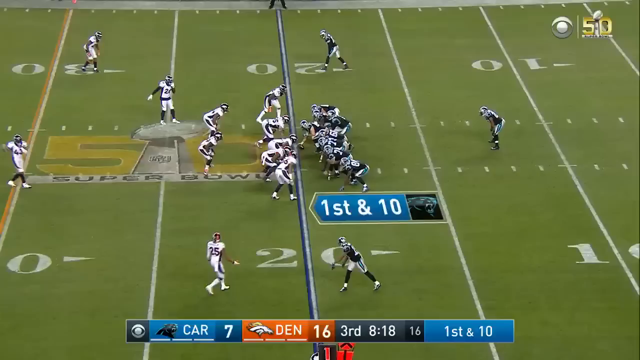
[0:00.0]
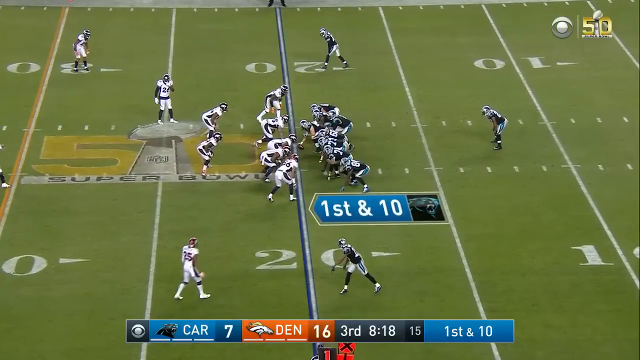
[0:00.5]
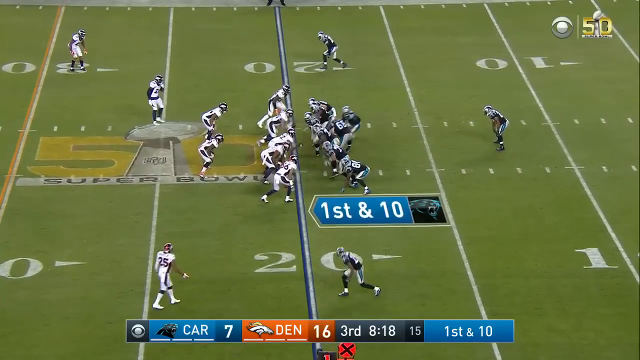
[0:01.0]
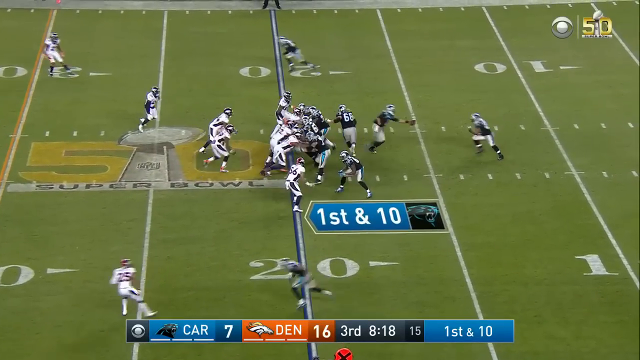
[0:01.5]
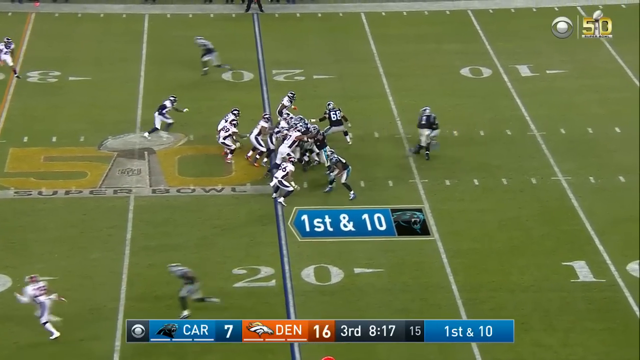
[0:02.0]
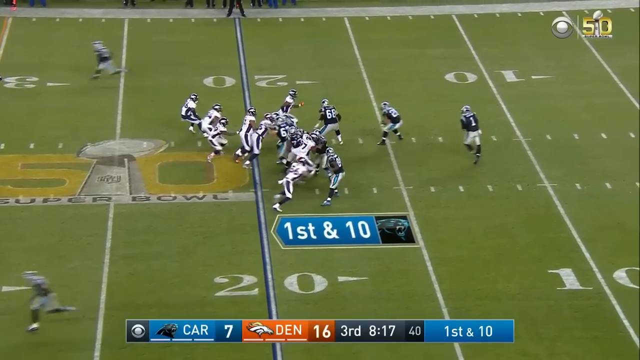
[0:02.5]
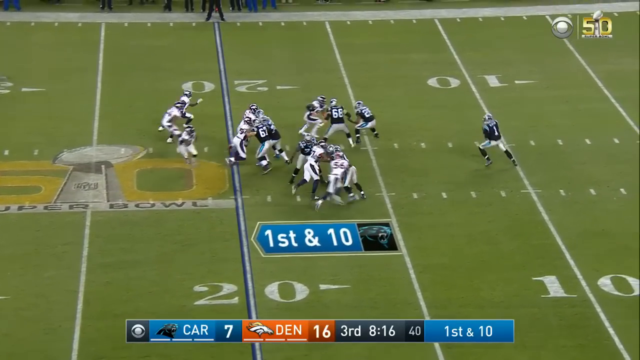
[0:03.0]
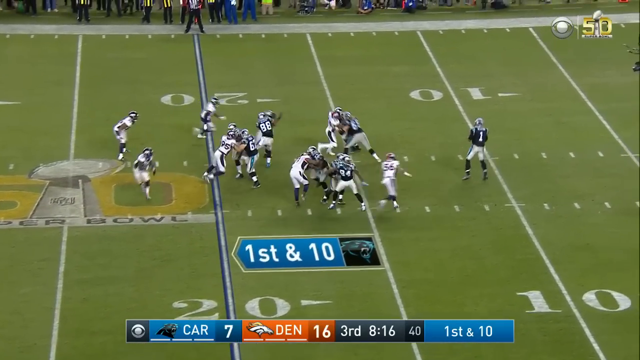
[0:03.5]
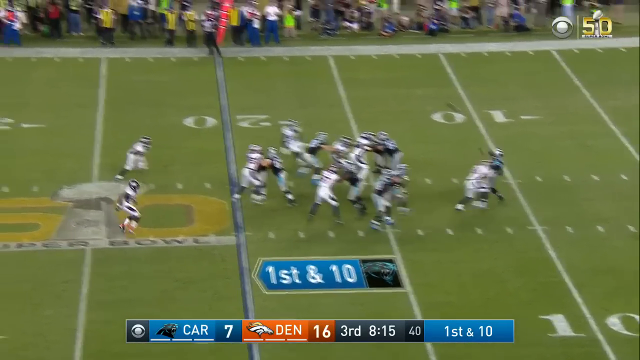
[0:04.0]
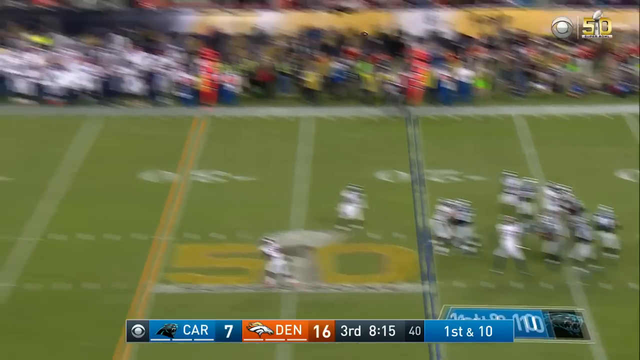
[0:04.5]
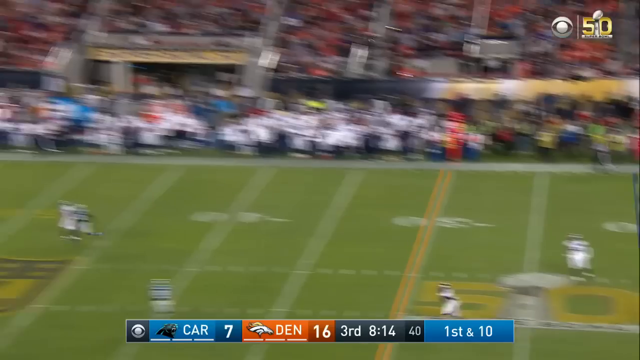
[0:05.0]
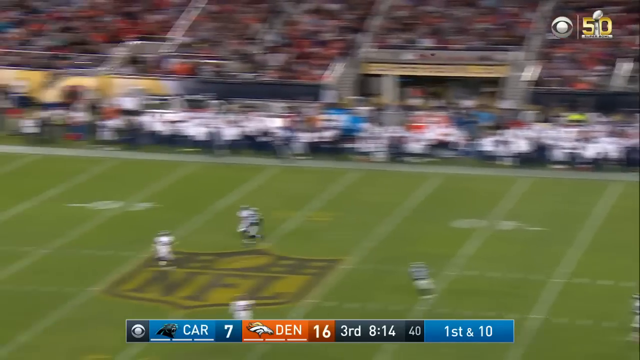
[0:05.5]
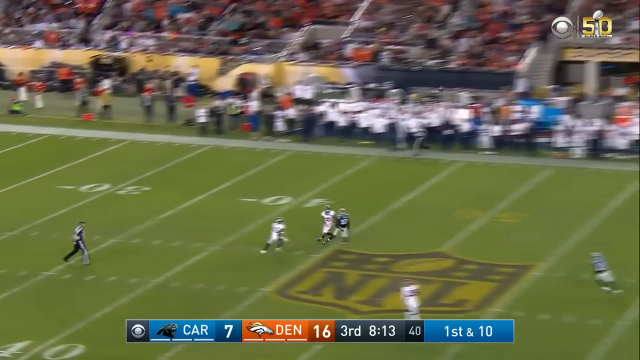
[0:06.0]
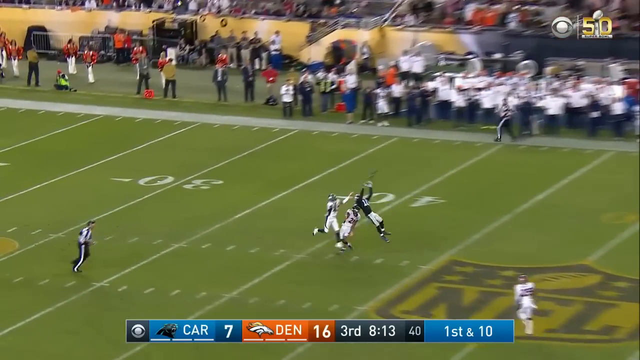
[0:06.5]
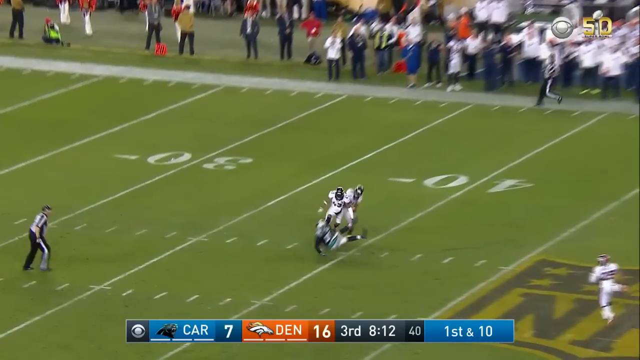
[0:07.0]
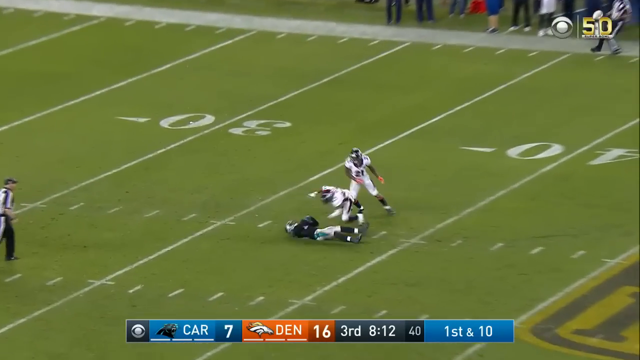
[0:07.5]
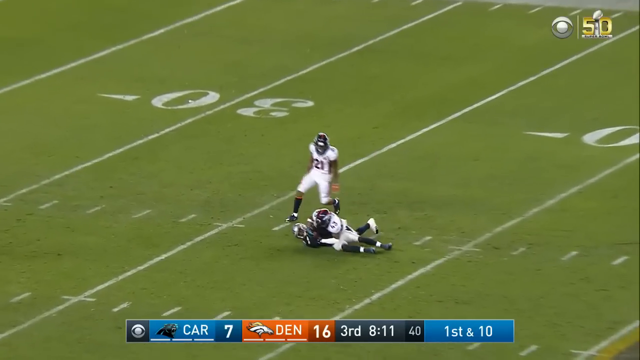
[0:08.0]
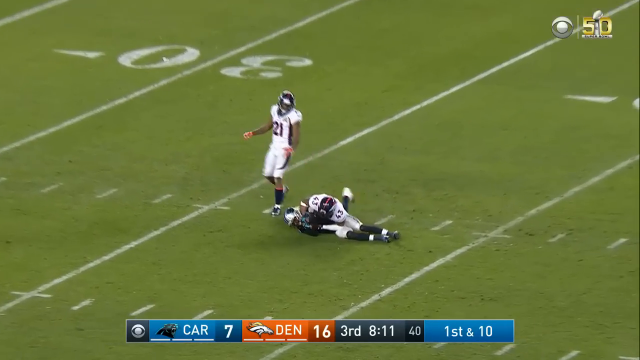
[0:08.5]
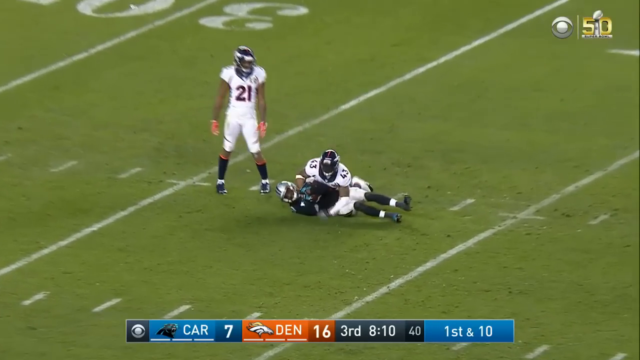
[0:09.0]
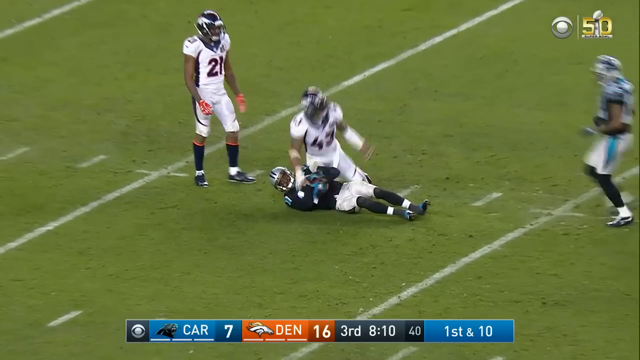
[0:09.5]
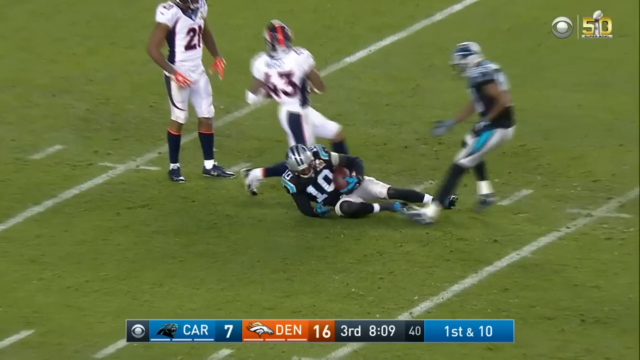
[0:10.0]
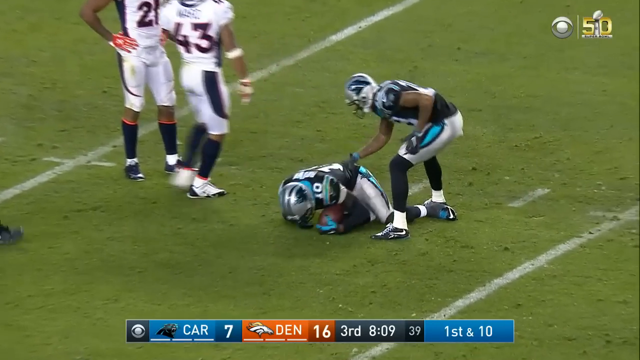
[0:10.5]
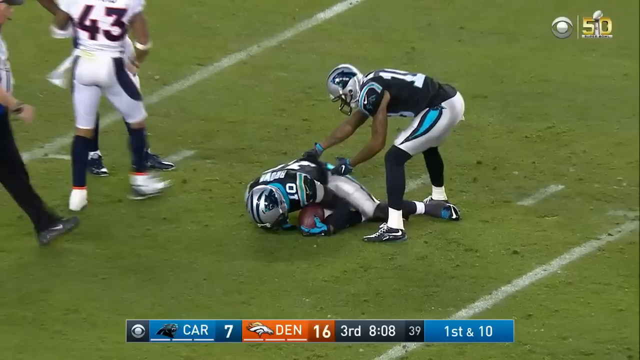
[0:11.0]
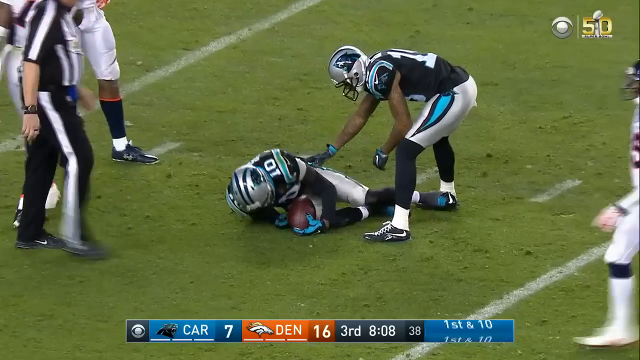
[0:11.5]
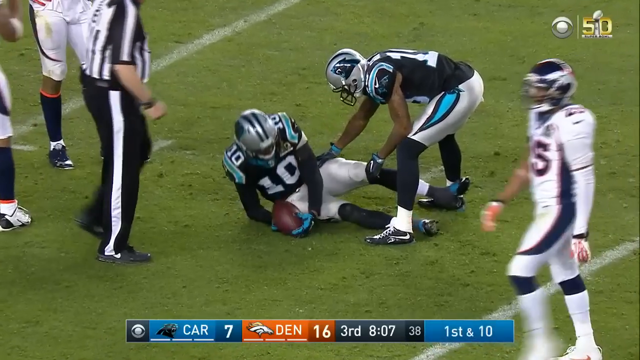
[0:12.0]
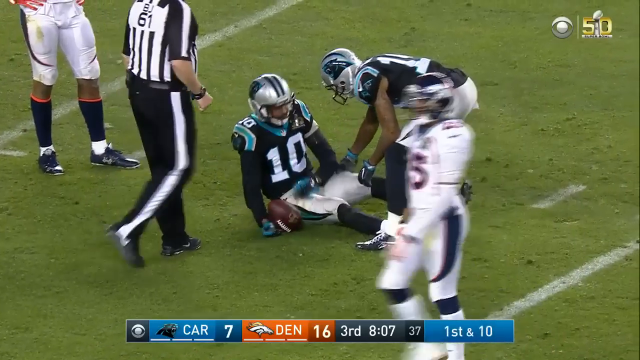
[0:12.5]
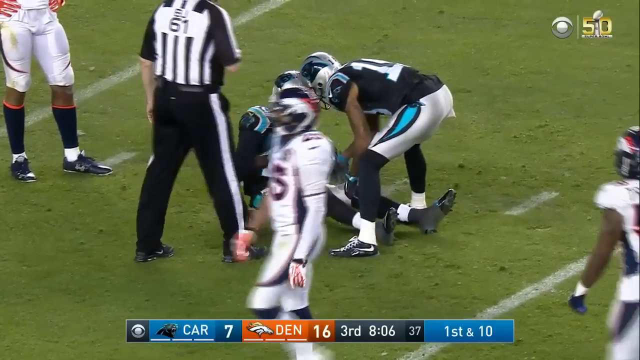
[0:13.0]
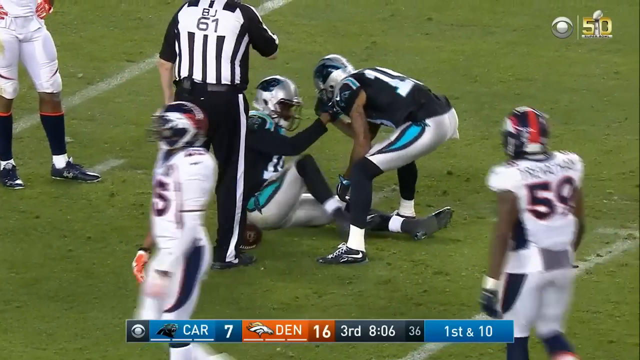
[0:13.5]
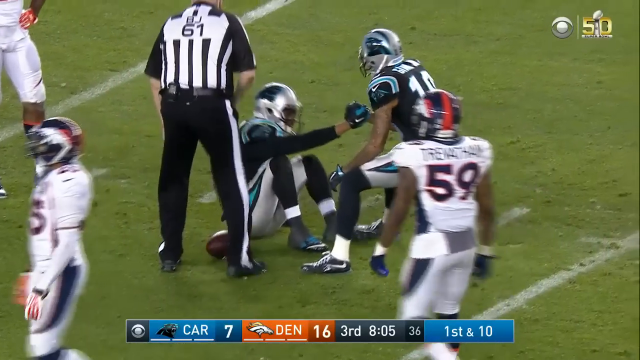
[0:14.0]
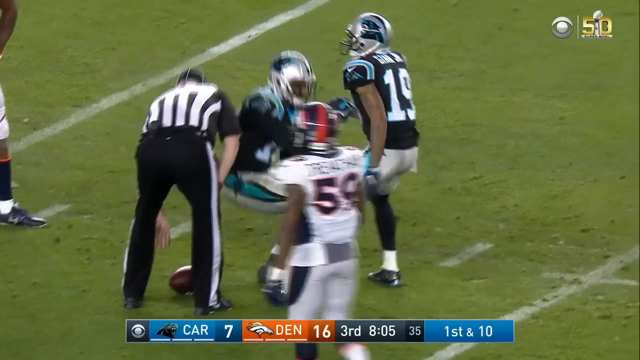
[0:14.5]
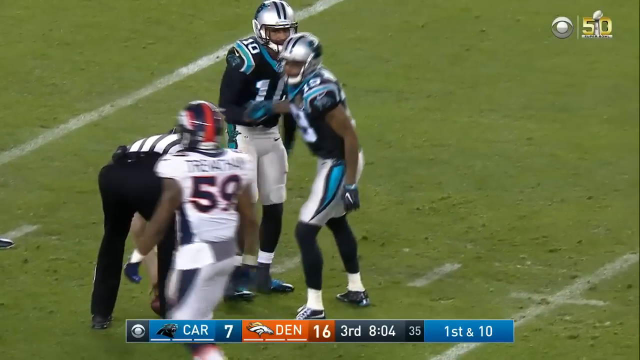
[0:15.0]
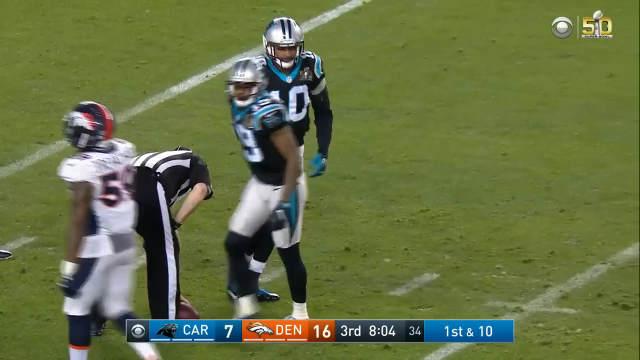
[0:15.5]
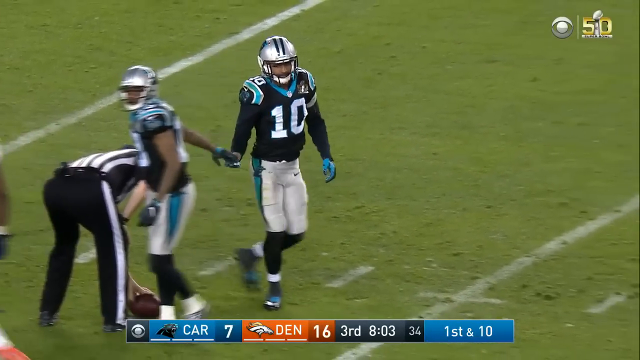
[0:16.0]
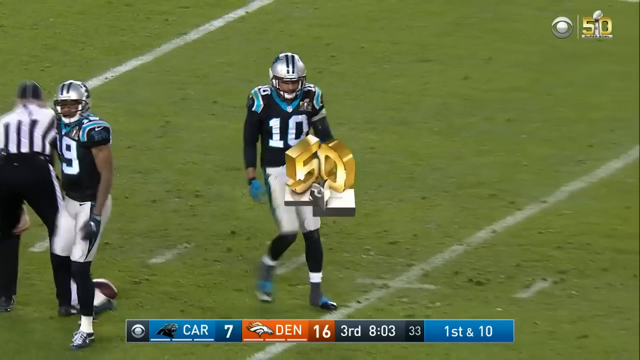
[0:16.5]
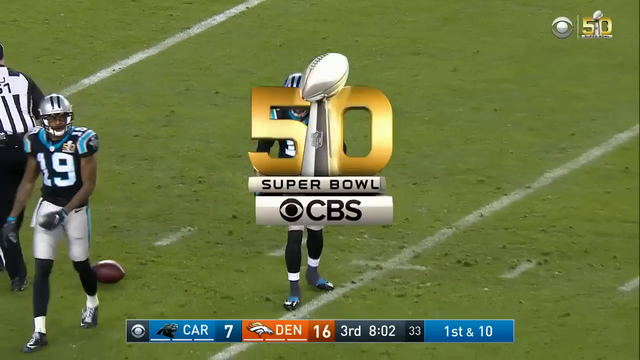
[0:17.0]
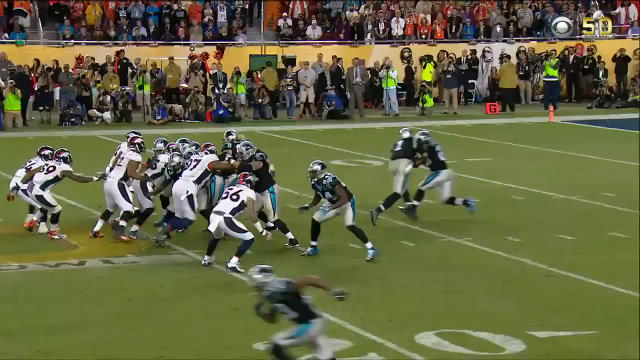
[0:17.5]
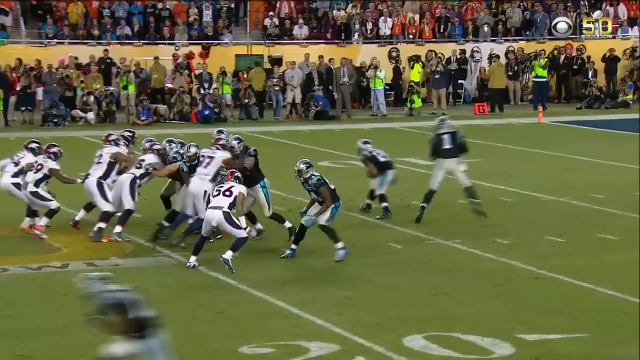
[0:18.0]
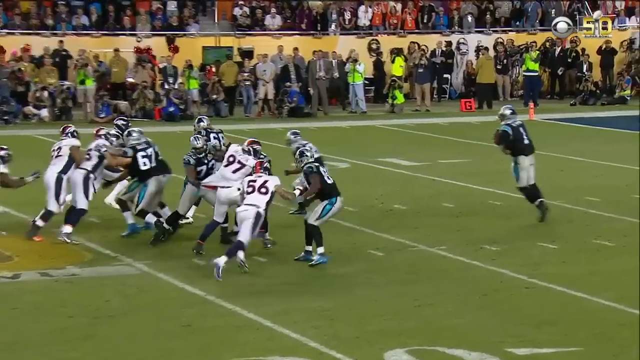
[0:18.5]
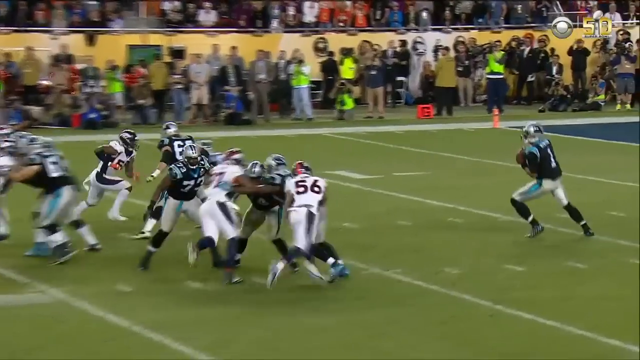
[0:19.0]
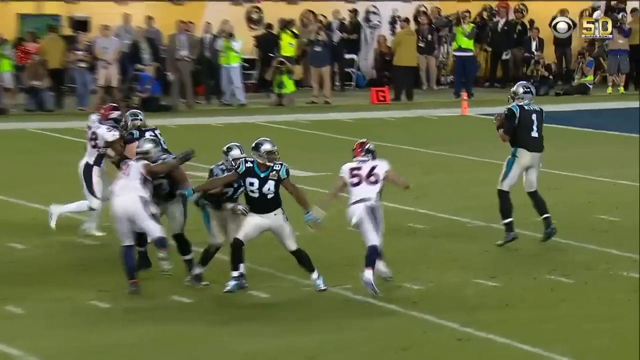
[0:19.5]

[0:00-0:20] A game between the Carolina Panthers and the Denver Broncos, both NFL teams, is played during Super Bowl 50. A scoreboard in the bottom center of the screen shows Carolina with 7 points and Denver with 16 points, in the third quarter with 8 minutes 18 seconds left, first and 10 on the Carolina Panthers' ball. Quarterback Cam Newton throws the football and completes a pass to one of his wide receivers, number 10. A short replay of the play follows. The Carolina Panthers' colors are black, teal and gray, while the Denver Broncos' colors are white, orange and blue. The video is rectangular, and several fans are shown around the stadium. The CBS and Super Bowl 50 logos appear in the upper right-hand corner.